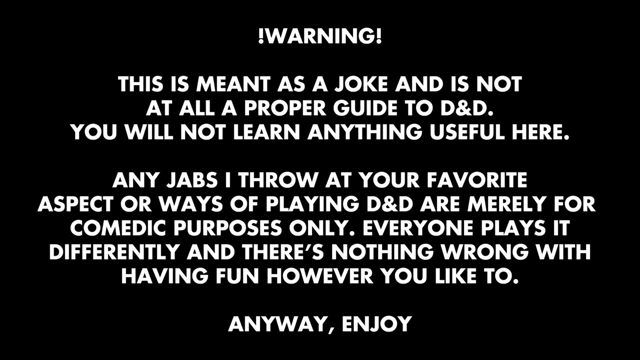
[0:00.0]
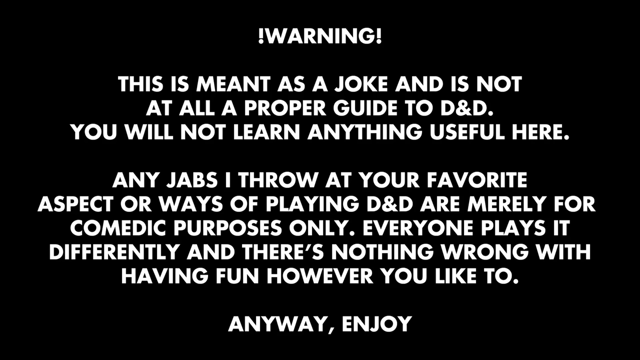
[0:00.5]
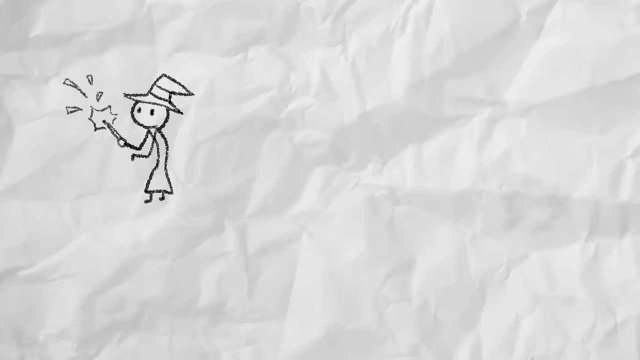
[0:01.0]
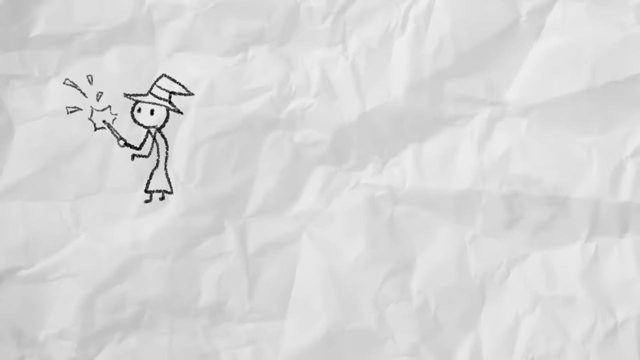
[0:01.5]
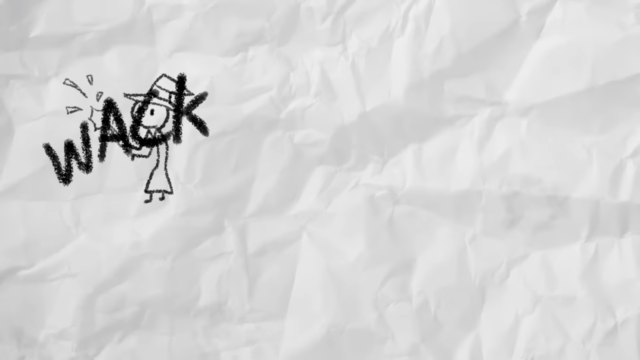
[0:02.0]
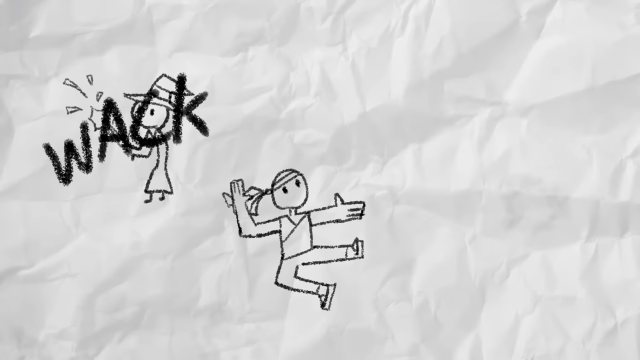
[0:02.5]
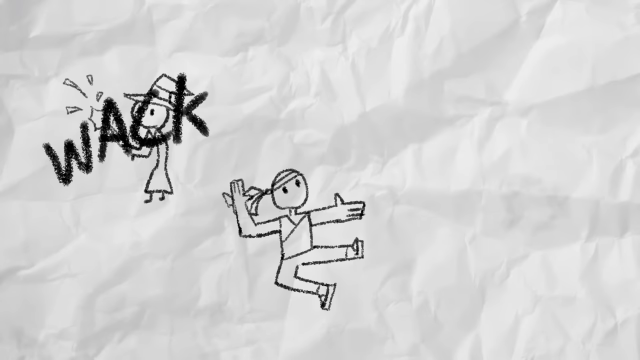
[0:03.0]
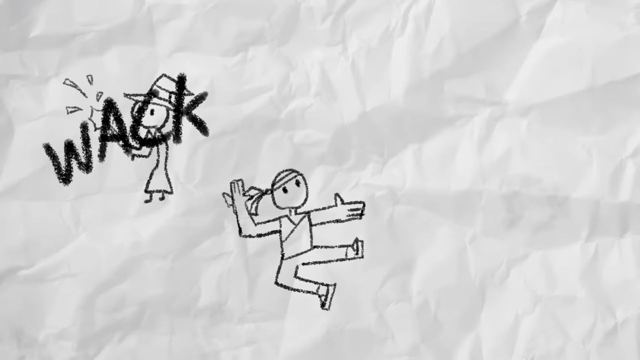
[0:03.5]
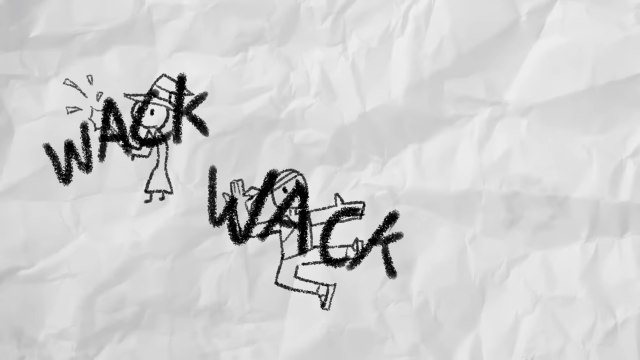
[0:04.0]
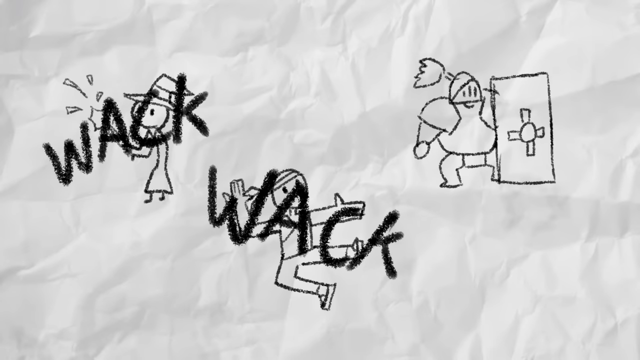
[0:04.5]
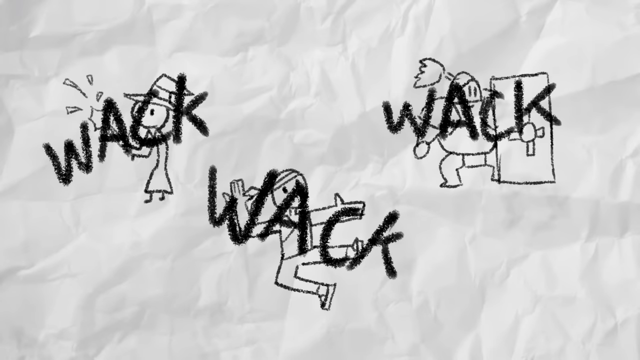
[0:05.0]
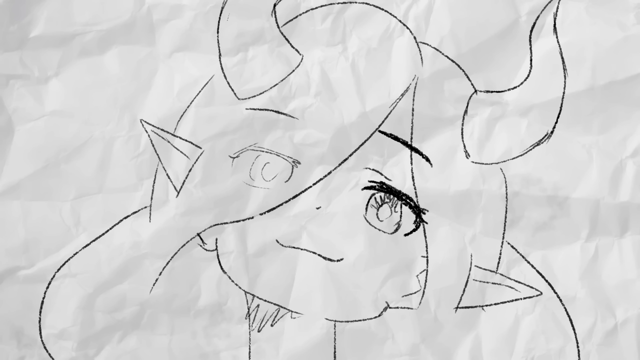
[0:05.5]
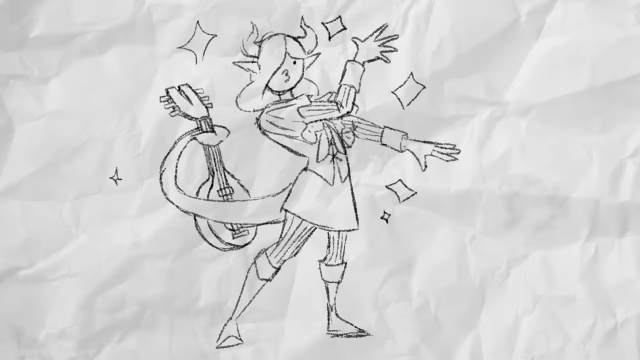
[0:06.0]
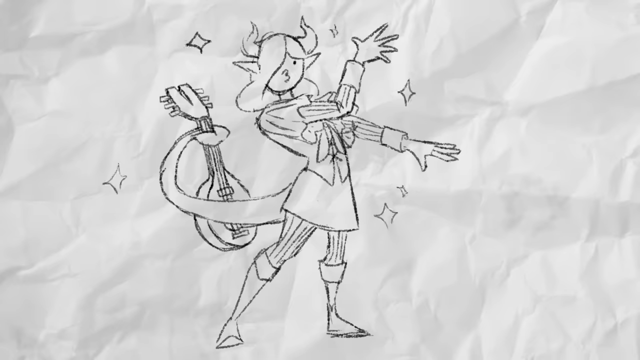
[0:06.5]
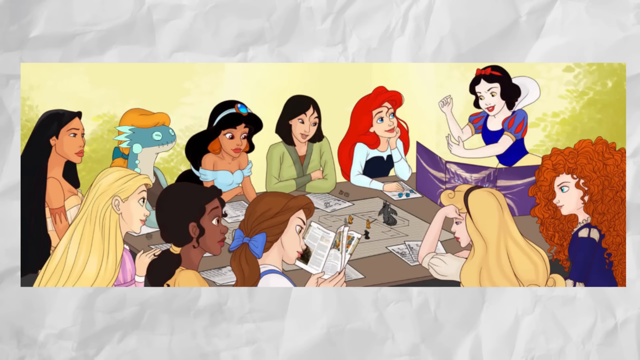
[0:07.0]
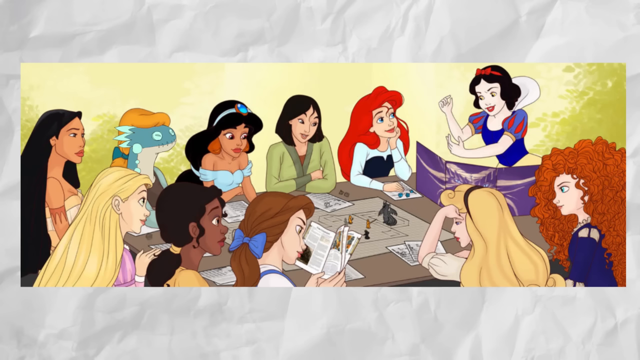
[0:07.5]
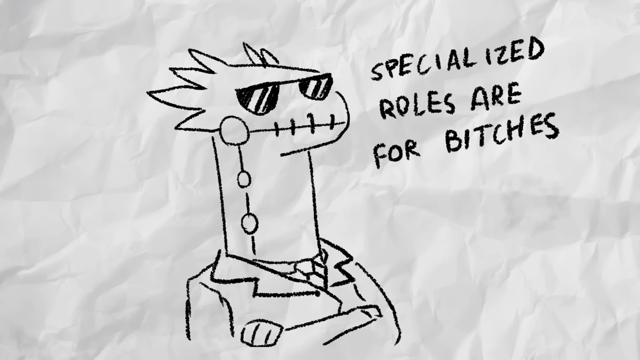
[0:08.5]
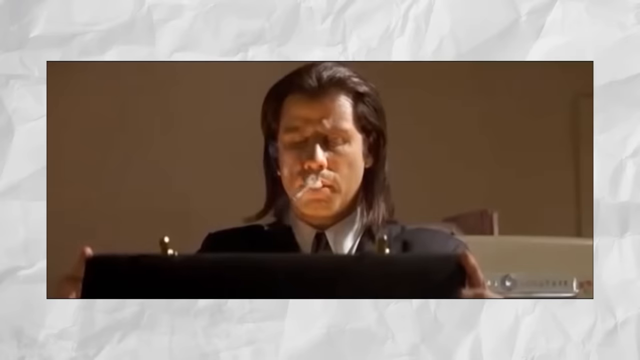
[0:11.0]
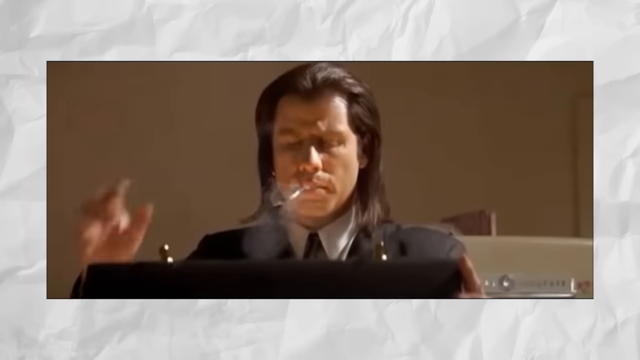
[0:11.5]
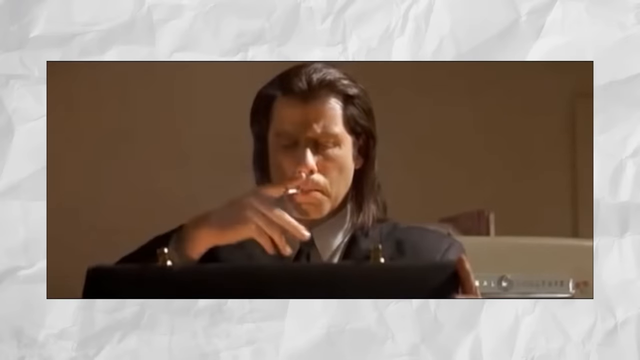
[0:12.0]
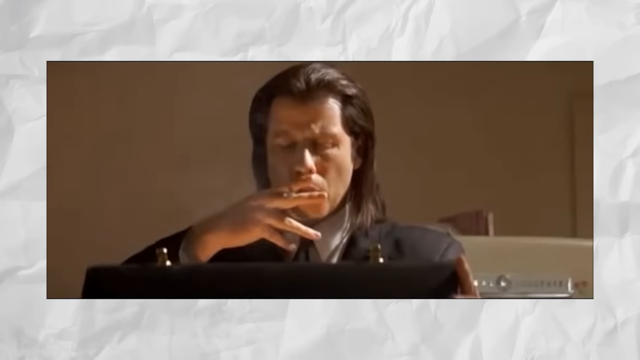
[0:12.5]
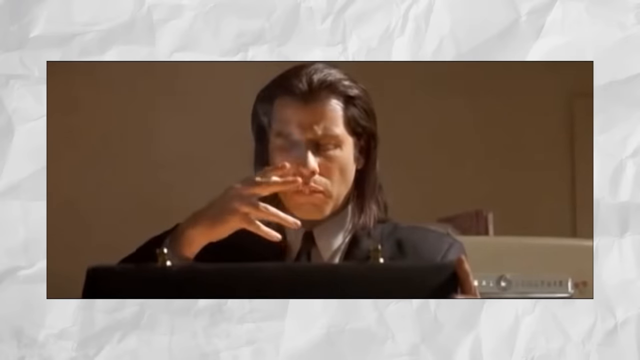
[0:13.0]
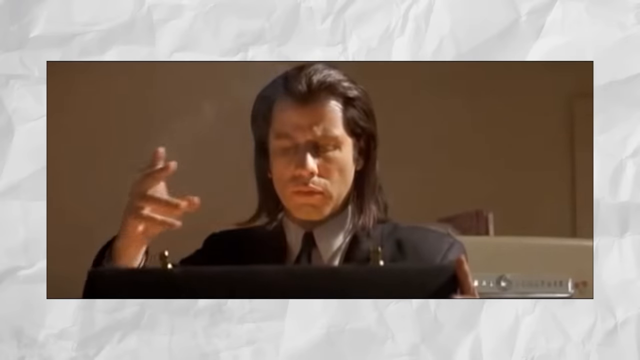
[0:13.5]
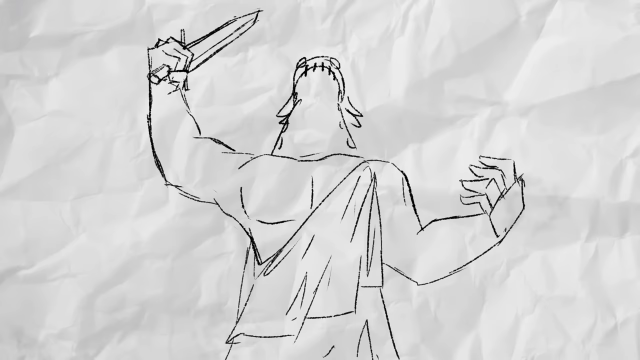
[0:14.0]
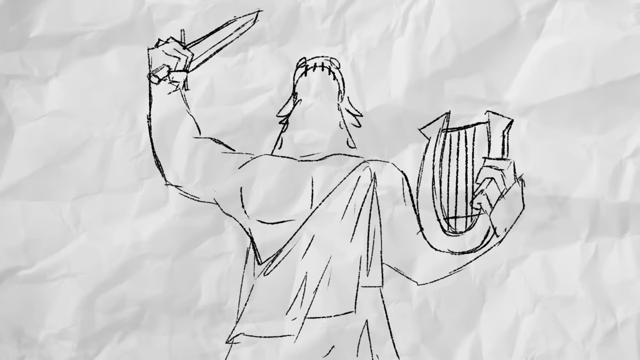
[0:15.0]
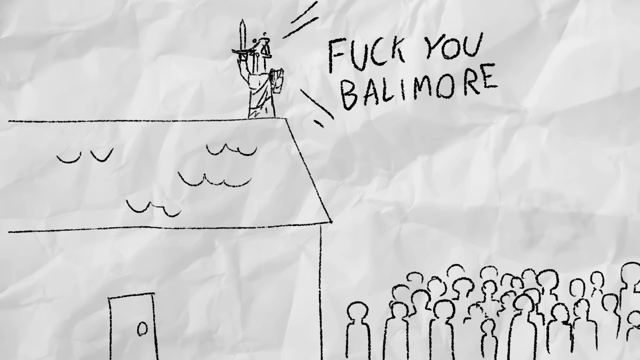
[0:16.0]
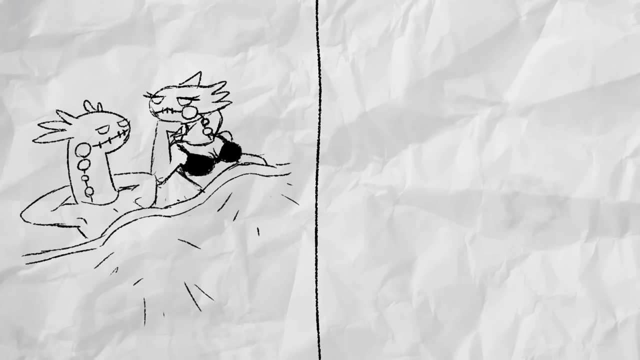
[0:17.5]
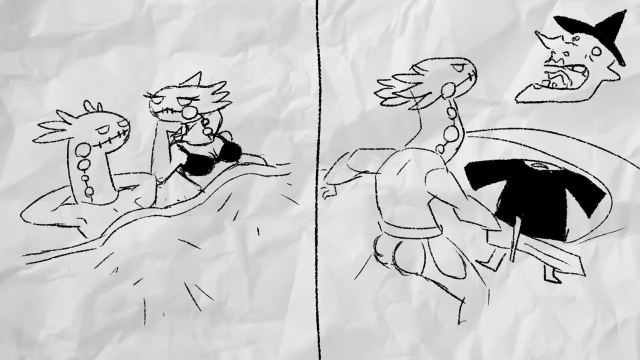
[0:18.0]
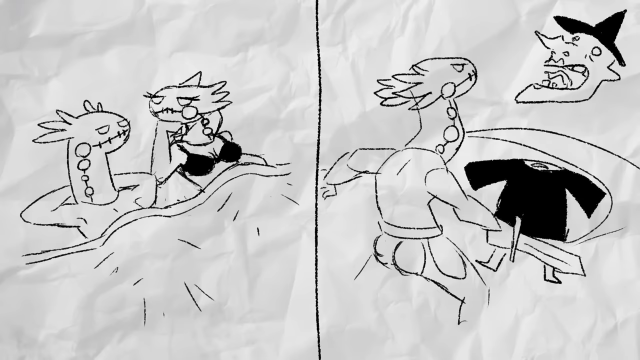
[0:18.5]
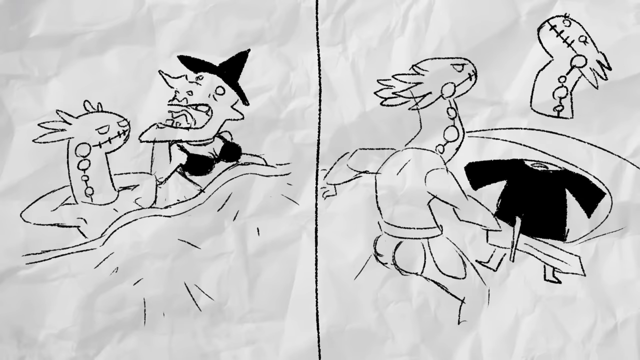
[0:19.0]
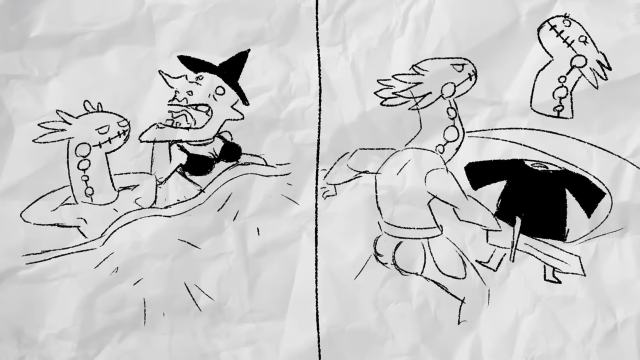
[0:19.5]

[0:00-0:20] The video opens with a warning screen in white text on a solid black background that reads: "This is meant as a joke and is not at all a proper guide to D&D. You will not learn anything useful here. Any jabs I threw at your favorite aspect or ways of playing D&D are merely for comedic purposes only. Everyone plays it differently and there's nothing wrong with having fun however you like to. Anyway, enjoy." Next a wizard appears against a crumpled white paper background, and black writing reading "wack", almost like chalkboard text, suddenly goes over the wizard. A drawing of a karate person follows, and the same black "wack" text goes over the top of him. Then a drawing of a knight in front of a vault door appears, and the same black chalkboard-style "wack" goes over the knight. A close-up shows the face of a drawn fairy-like female character, followed by a zoomed-out drawing of the same character showing her long tail gripped around the neck of a guitar or ukulele; some drawn stars surround her, still on the white crumpled paper background. Next is a graphic image of Disney princesses around a table, including Snow White, Merida, Cinderella, Beauty, Pocahontas, Aladdin, Rapunzel, Ariel and a couple of others, all working on papers and games on the table. A drawing of a dinosaur wearing a suit and black sunglasses follows; he almost looks like an iguana, and the text says "specialized roles are for bitches", against the white crumpled paper background. Over the crumpled paper, an image of John Travolta in a movie role appears, with slicked-back black hair and a black suit, smoking a cigarette. Then the dinosaur or iguana is drawn raising a sword in the air; he has normal hands and pecs and seems to be wearing a toga, and one of his hands suddenly switches to hold a harp. In the next scene a large crowd of people stands in front of a house while the iguana or dinosaur guy stands on top of the house holding a sword to the sky, with on-screen text reading "Fuck you, Balimor." Next, a frame split down the middle by a black line shows, on the left, the iguana in bed with a female iguana or dinosaur wearing a black bra, the covers up to their waist, and on the right, the iguana with a sword in hand cutting off the head of a witch in a black hat and black shirt.